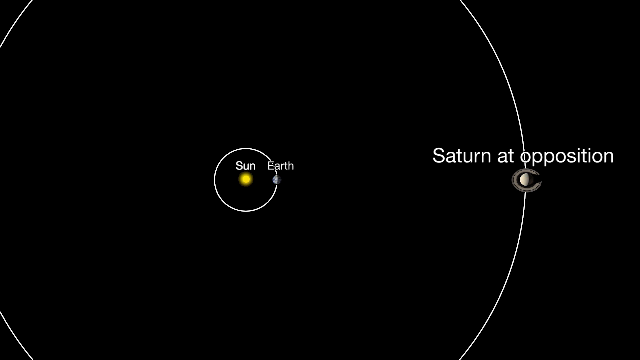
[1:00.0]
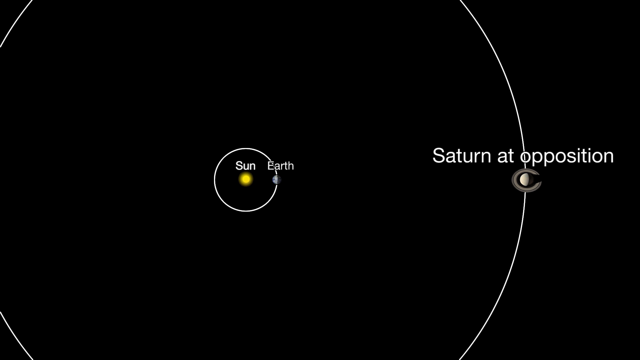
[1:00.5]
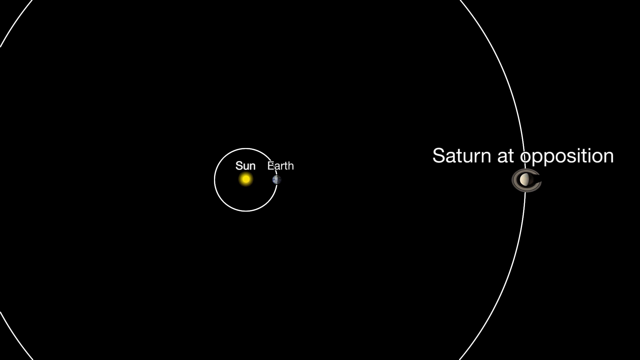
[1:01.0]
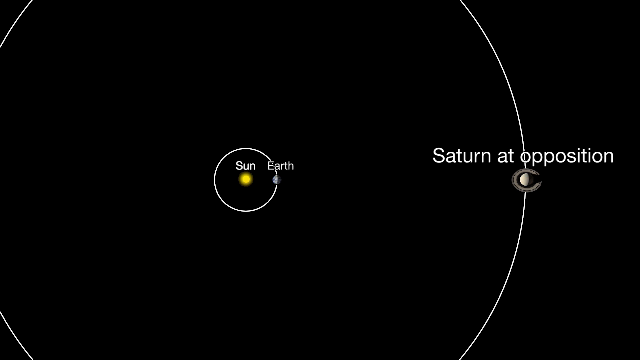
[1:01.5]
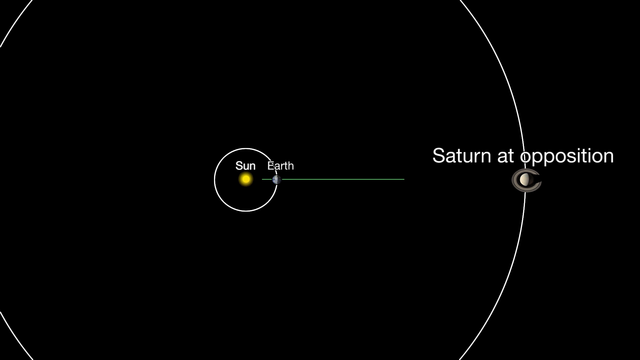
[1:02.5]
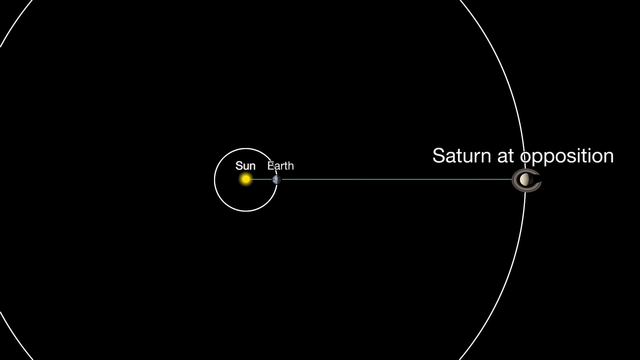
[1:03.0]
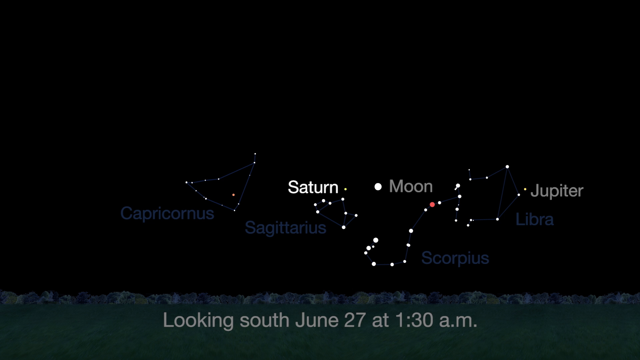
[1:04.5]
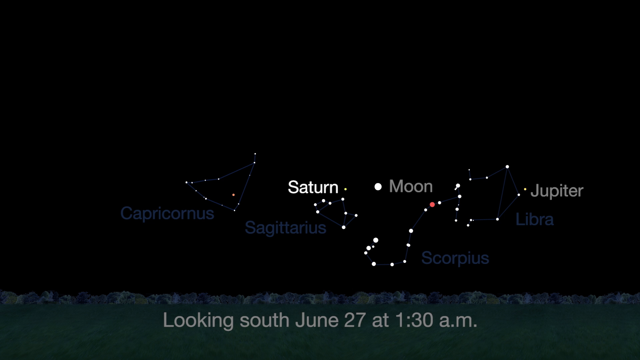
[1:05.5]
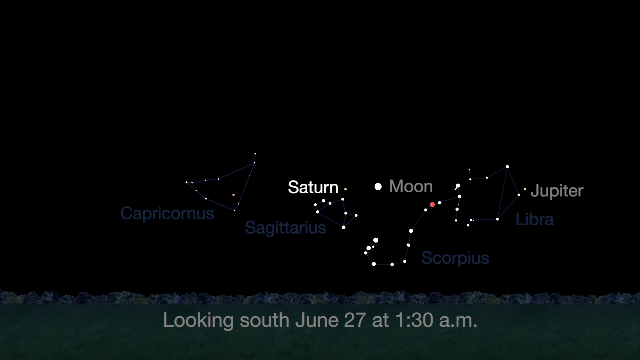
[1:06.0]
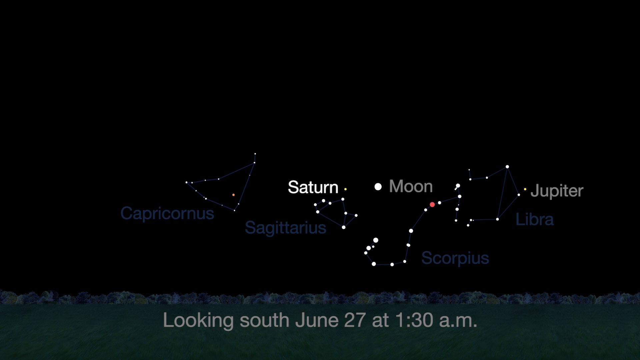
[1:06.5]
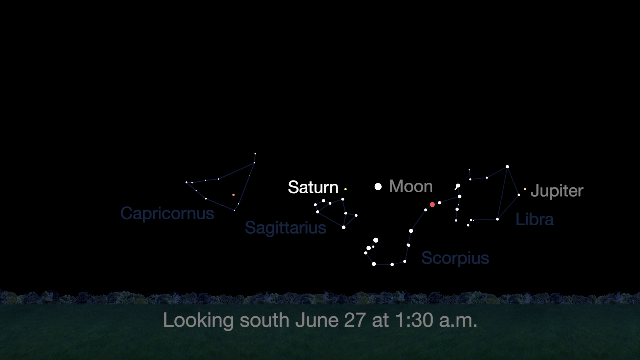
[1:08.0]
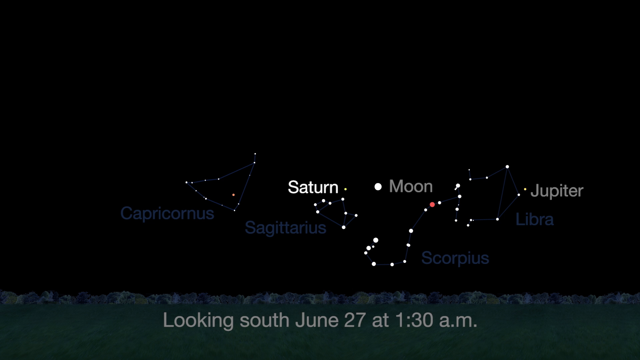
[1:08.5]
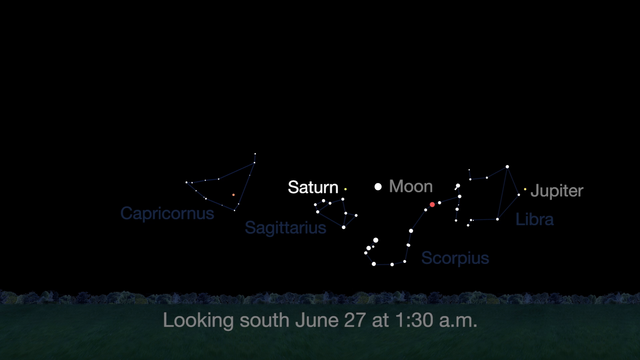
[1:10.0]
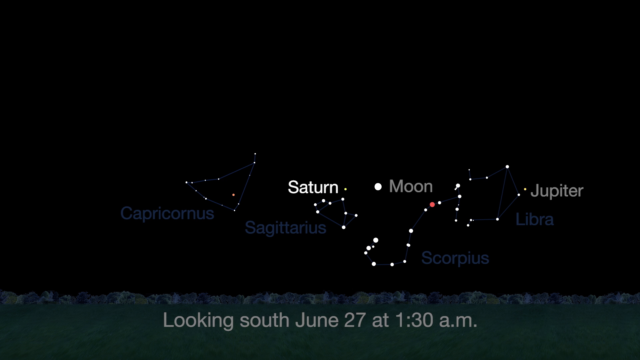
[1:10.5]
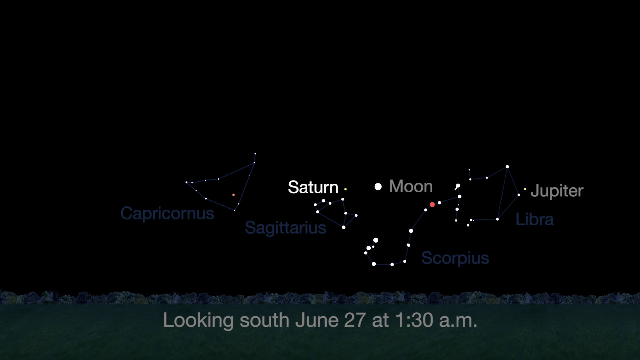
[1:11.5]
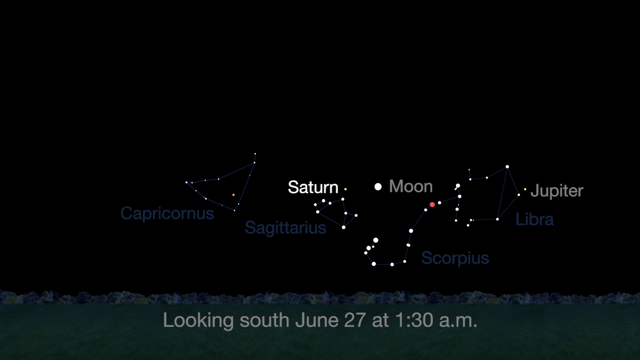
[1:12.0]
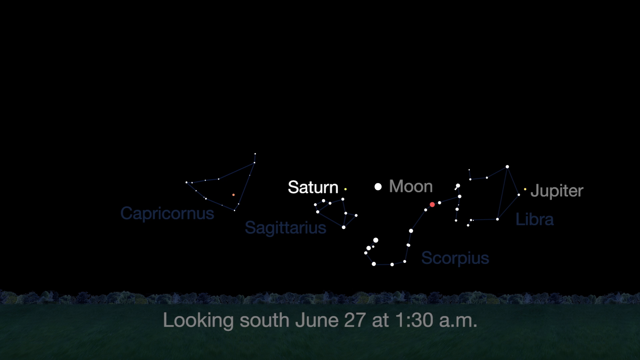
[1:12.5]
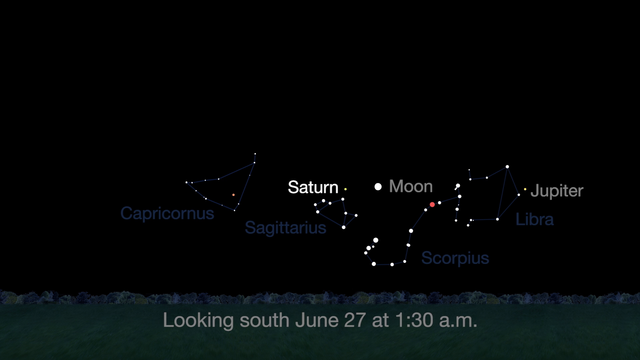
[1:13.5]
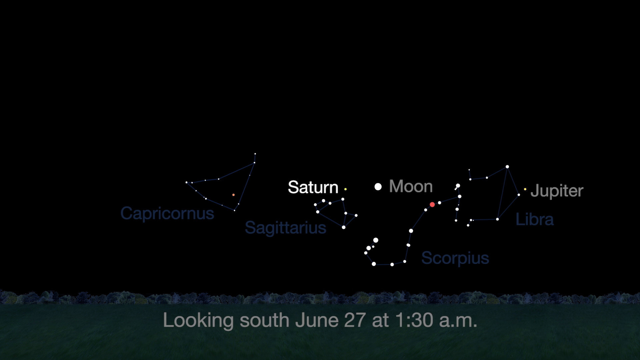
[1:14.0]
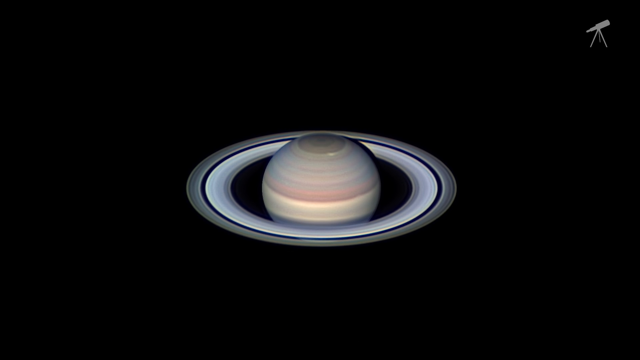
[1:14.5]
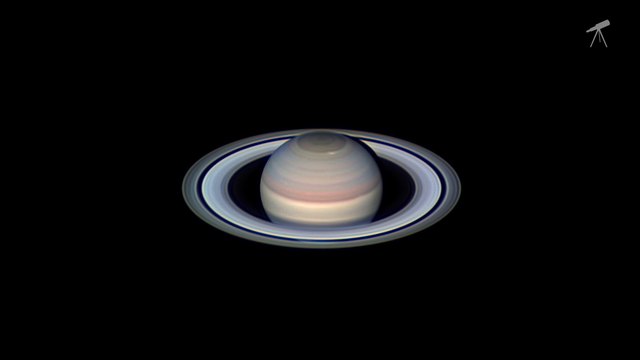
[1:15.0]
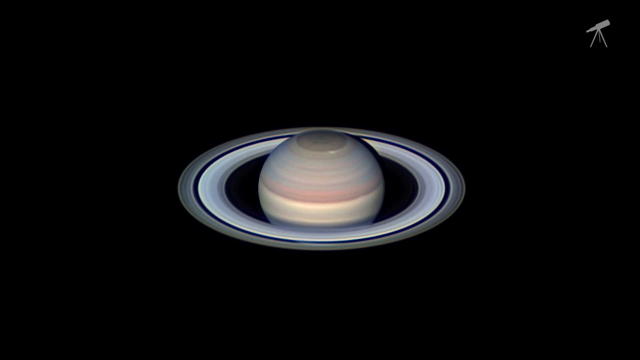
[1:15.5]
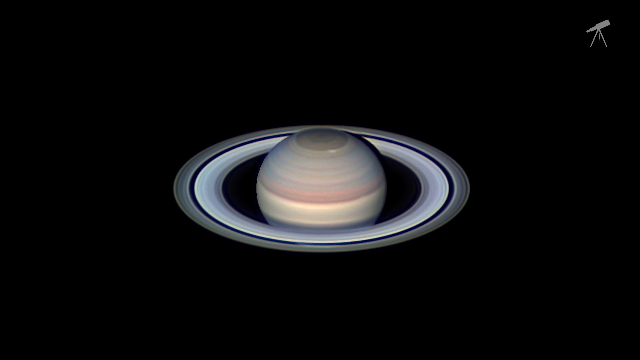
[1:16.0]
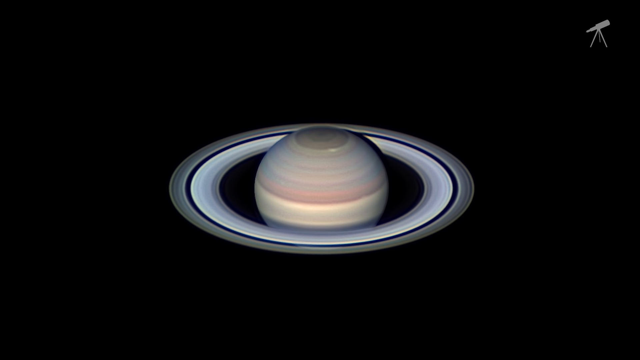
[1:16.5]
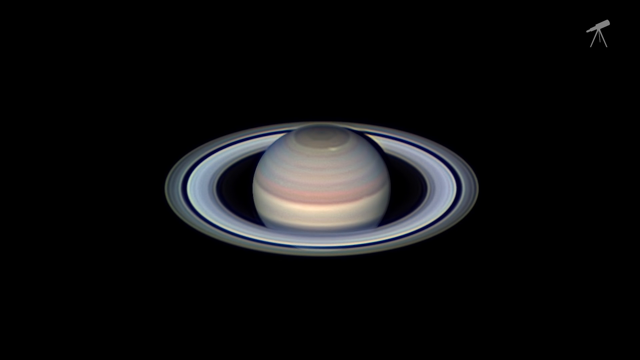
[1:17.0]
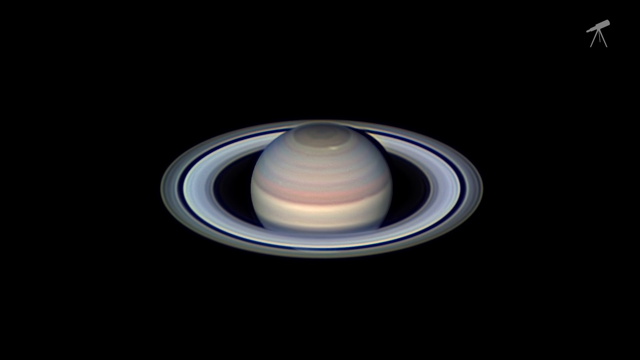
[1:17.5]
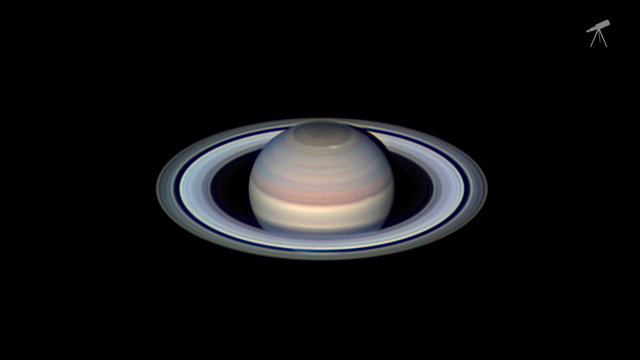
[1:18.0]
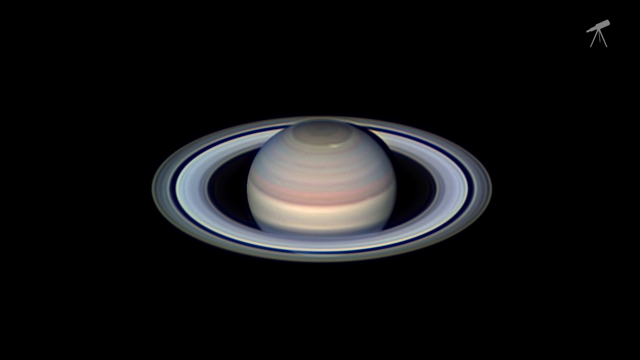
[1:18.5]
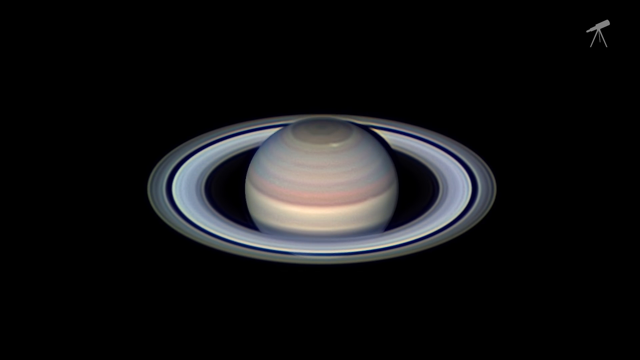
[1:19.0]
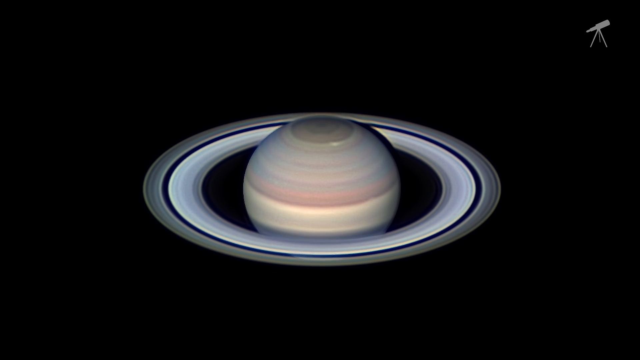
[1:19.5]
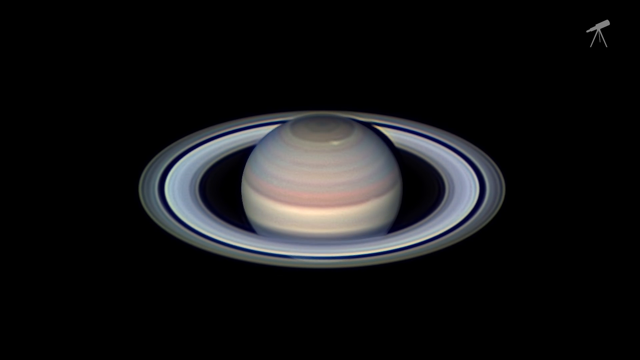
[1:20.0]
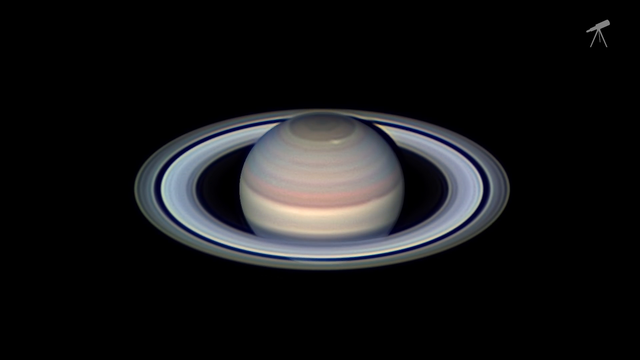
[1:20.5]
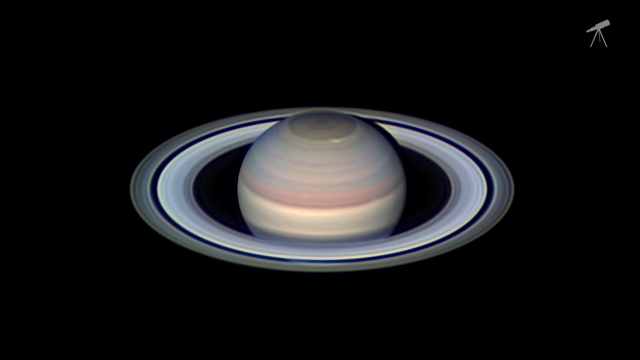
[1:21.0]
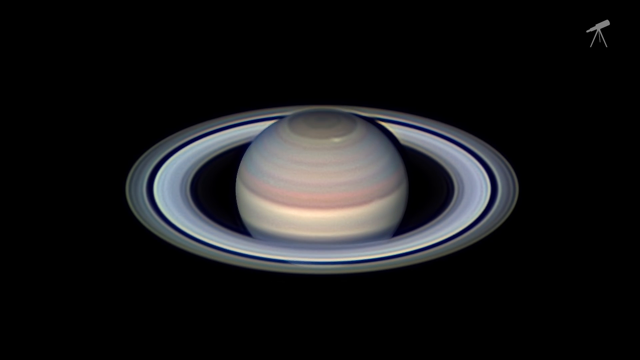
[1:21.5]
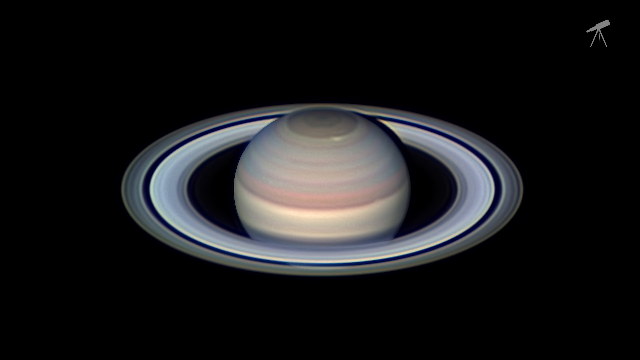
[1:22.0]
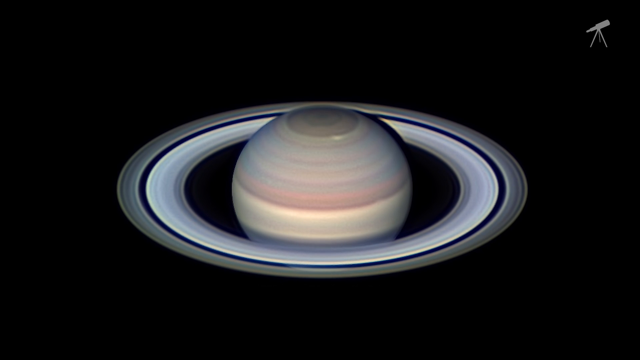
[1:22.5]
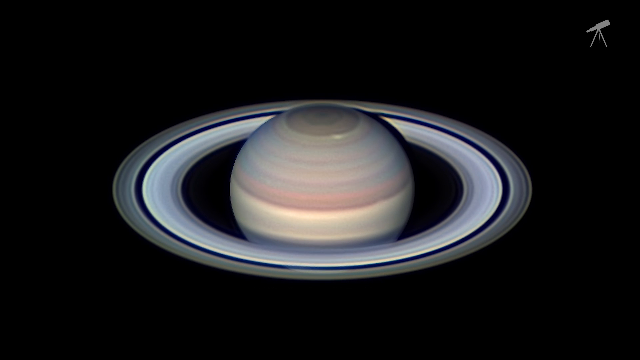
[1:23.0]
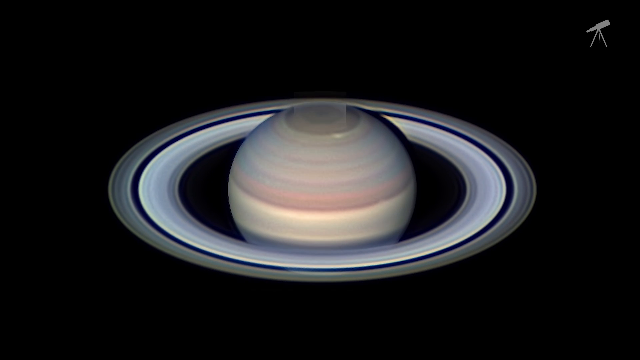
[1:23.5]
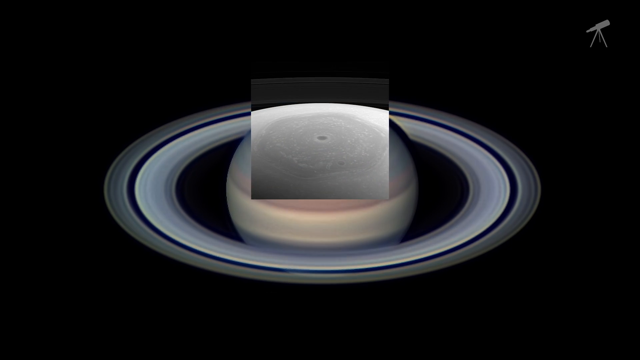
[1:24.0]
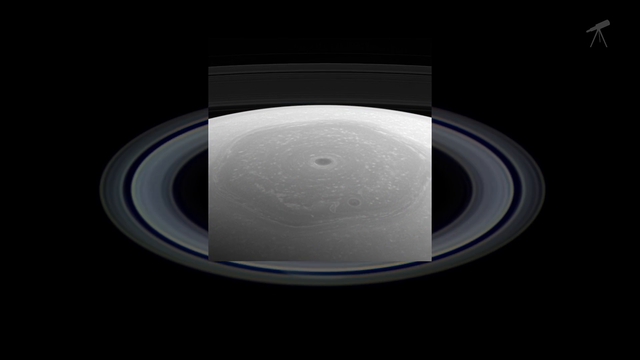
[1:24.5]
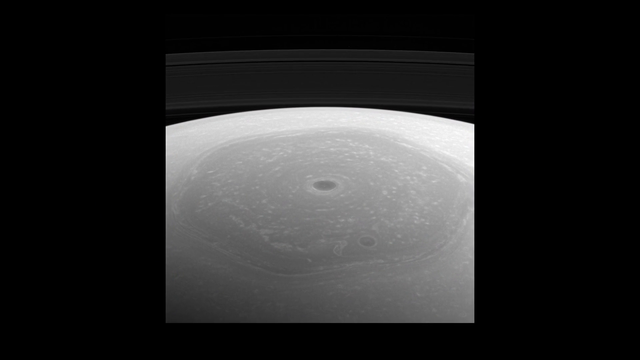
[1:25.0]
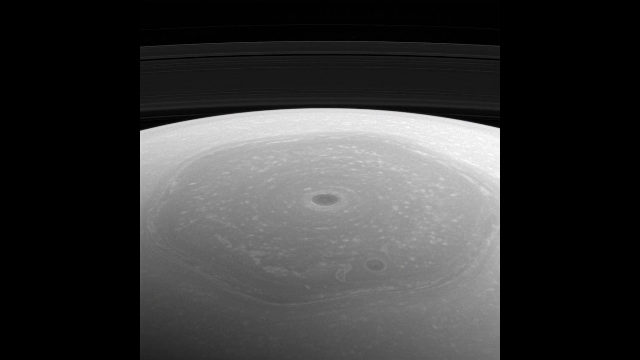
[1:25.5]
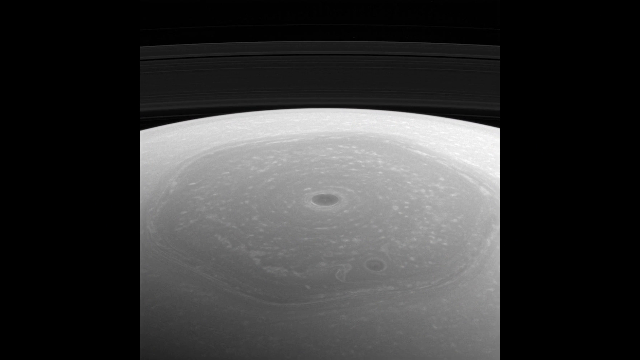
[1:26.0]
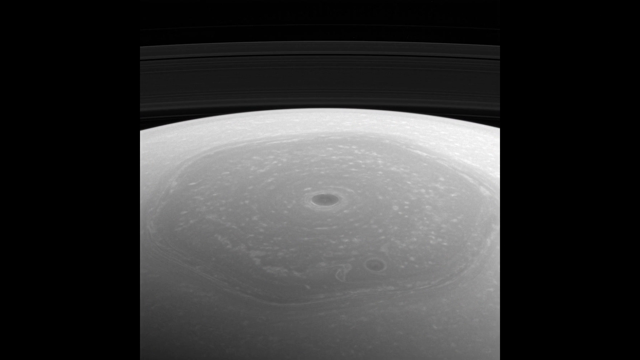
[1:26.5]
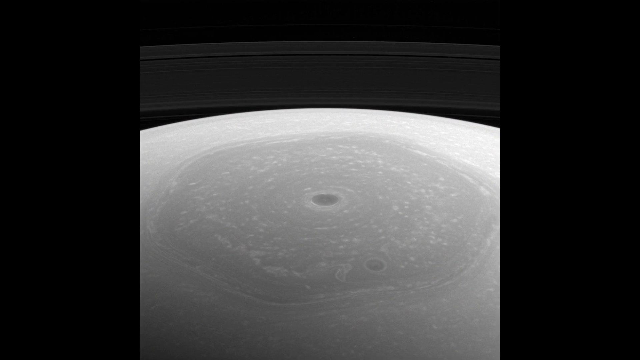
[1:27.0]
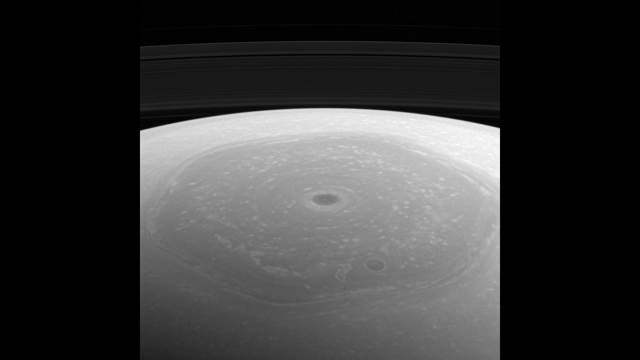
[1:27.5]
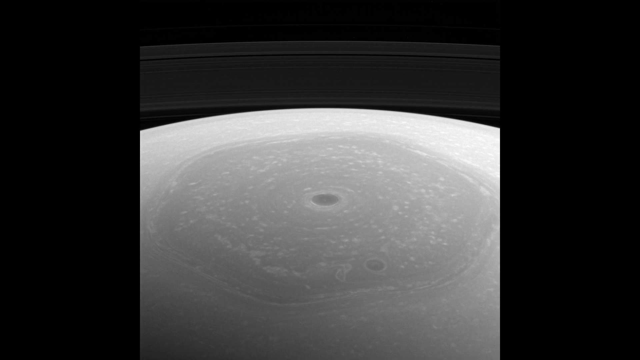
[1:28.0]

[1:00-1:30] A zoomed-in version of the orbit diagram shows the Sun in the middle as a yellow dot, with the orbit of Earth and the orbit of Saturn. A straight green line runs from the Sun through Earth and on to Saturn, showing Saturn at opposition. A sky map then shows the constellations Capricorn, Sagittarius, Scorpius and Libra, as well as the planets Saturn and Jupiter and the moon. There is also a red dot in the sky whose meaning is unclear. The map is looking south on June 27th at 11:30 a.m. Next comes a 3D computer-animated image of Saturn with its ring and different colored bands on its surface, and the view zooms in on a close-up snapshot of one of Saturn's storms.